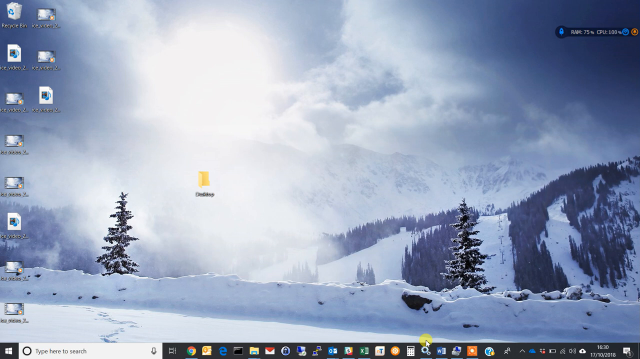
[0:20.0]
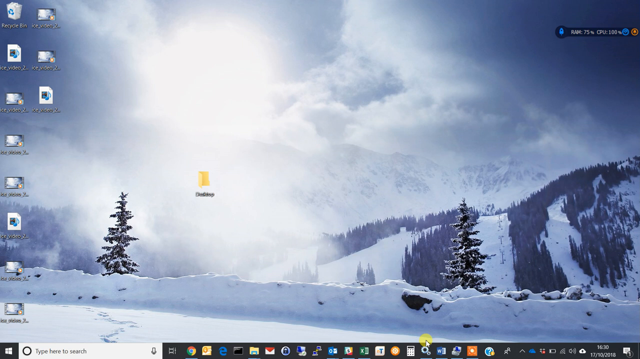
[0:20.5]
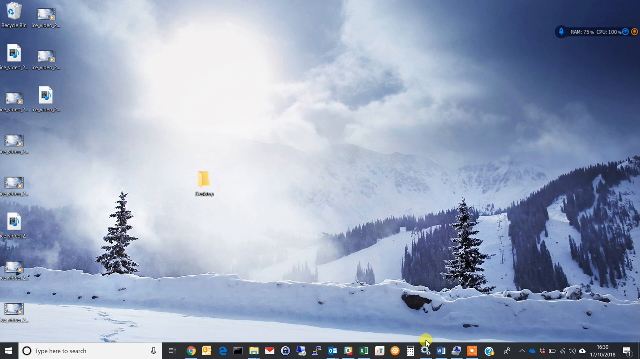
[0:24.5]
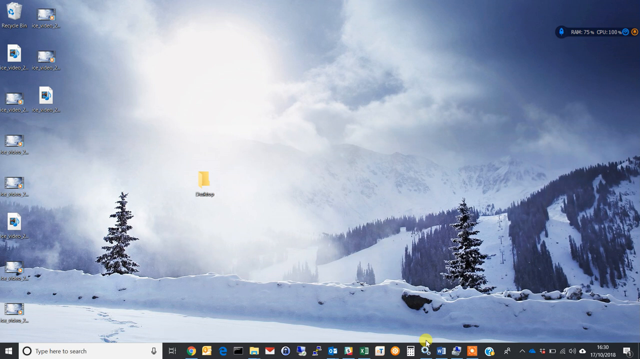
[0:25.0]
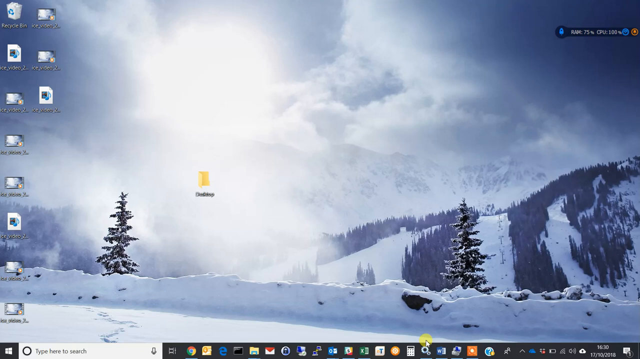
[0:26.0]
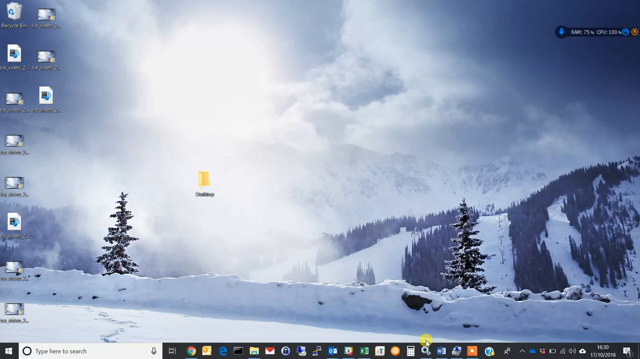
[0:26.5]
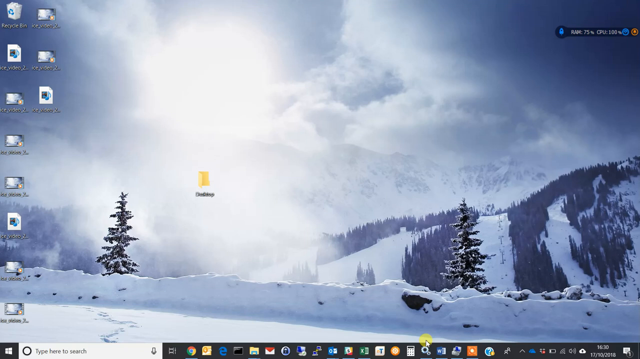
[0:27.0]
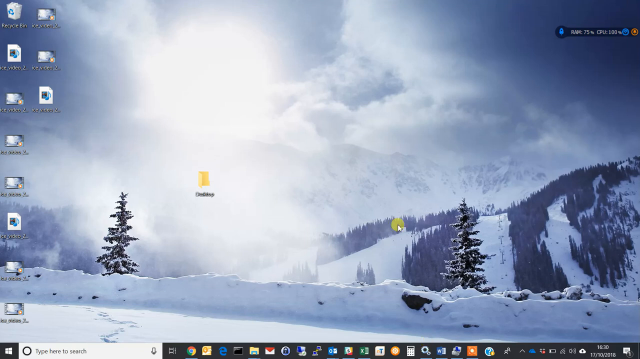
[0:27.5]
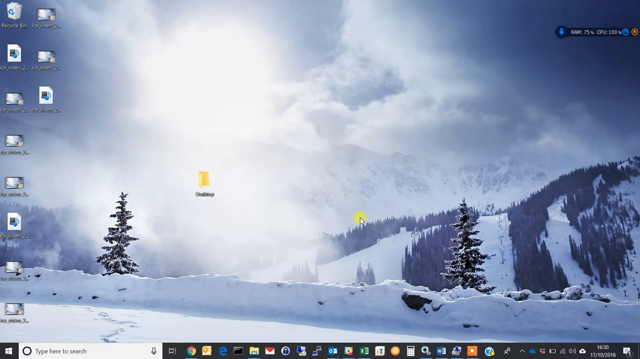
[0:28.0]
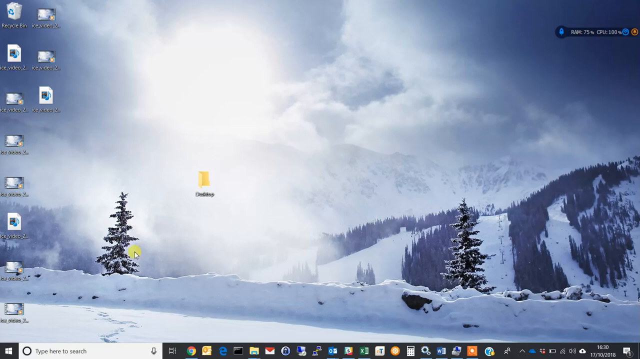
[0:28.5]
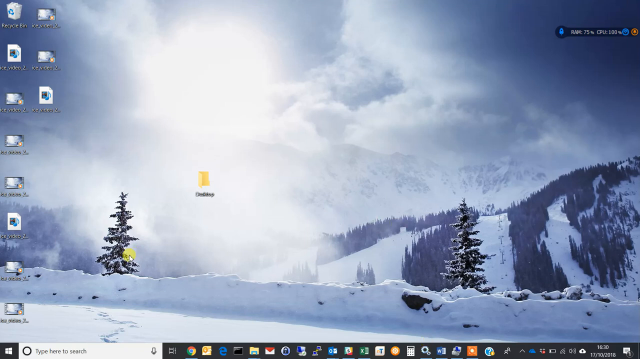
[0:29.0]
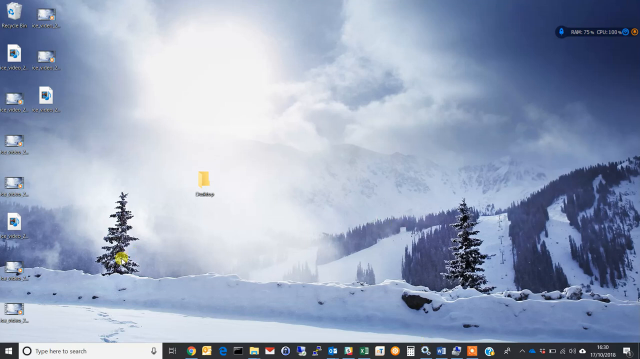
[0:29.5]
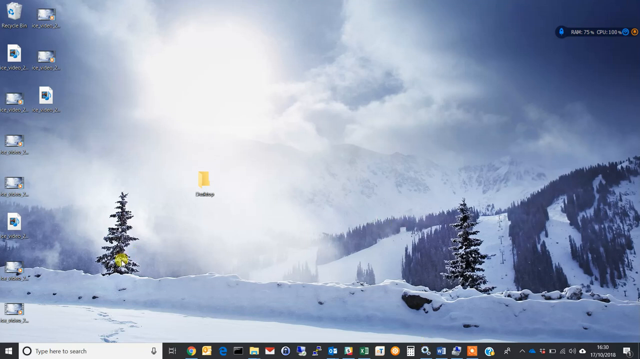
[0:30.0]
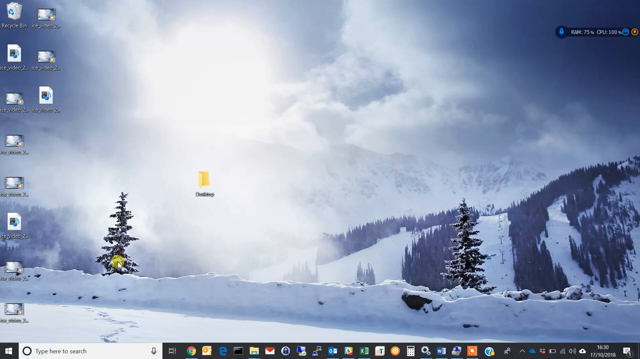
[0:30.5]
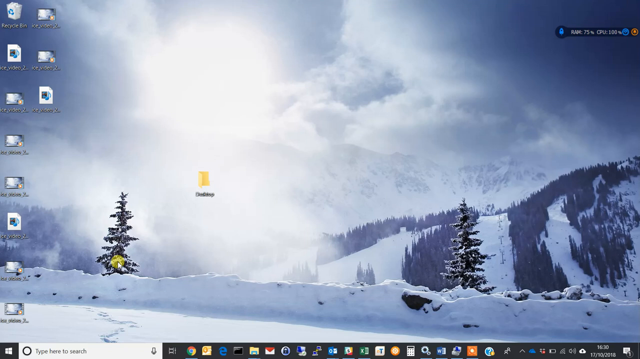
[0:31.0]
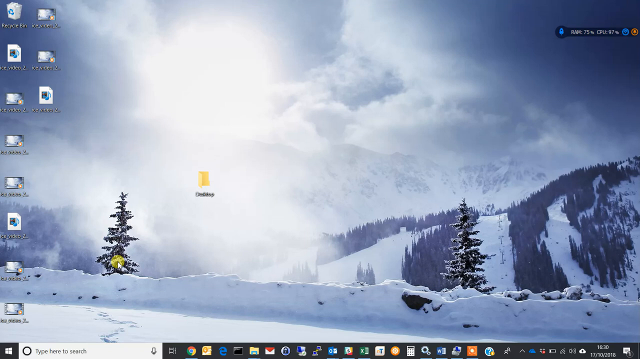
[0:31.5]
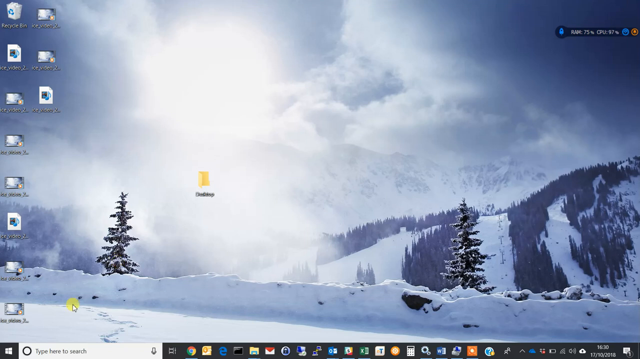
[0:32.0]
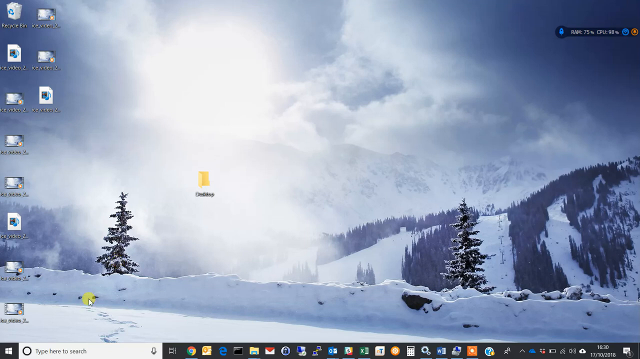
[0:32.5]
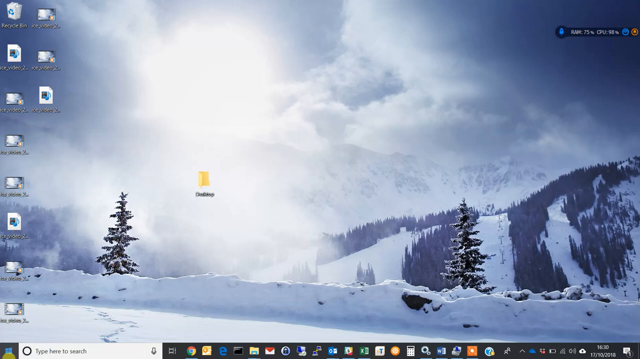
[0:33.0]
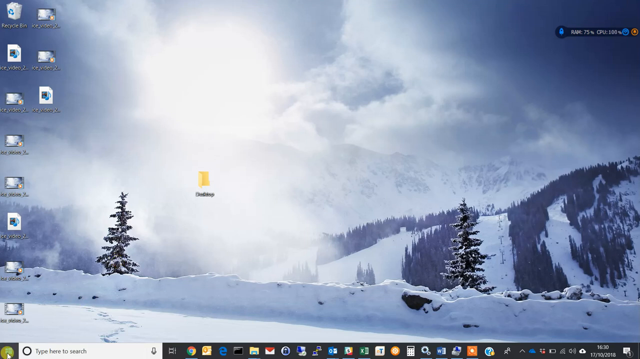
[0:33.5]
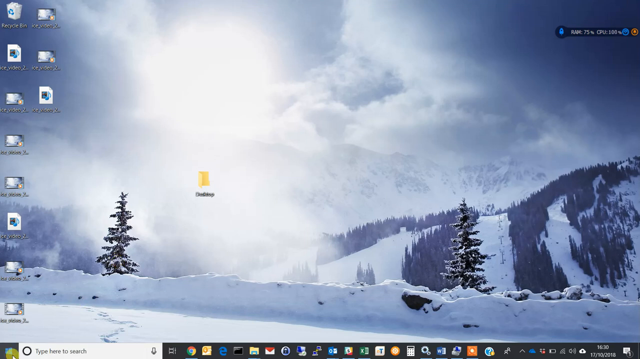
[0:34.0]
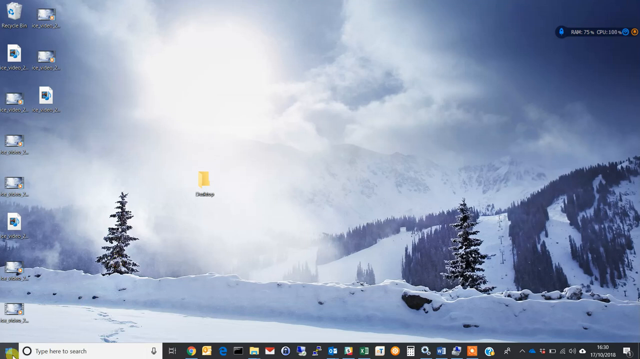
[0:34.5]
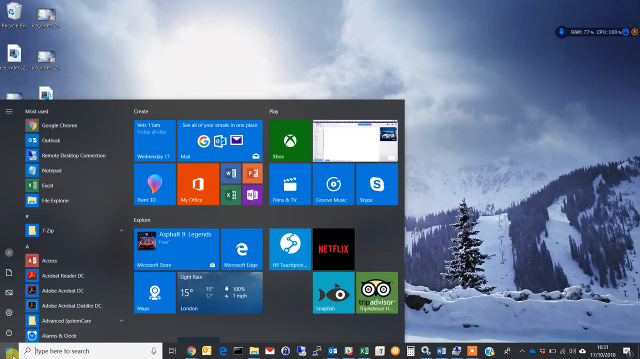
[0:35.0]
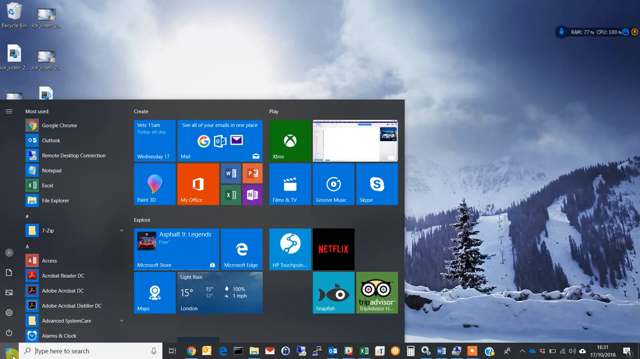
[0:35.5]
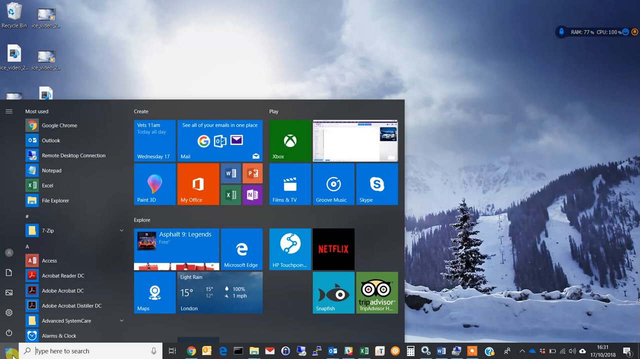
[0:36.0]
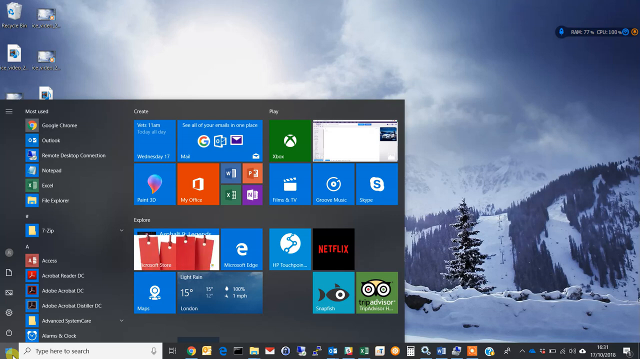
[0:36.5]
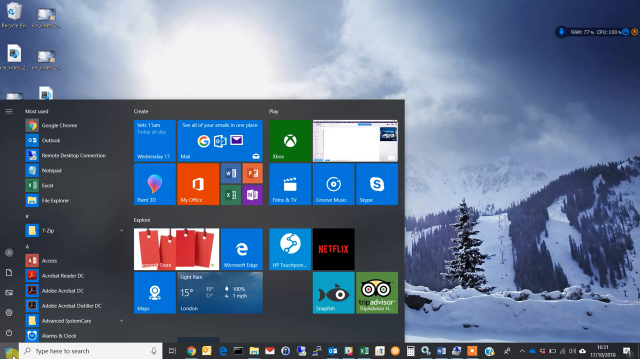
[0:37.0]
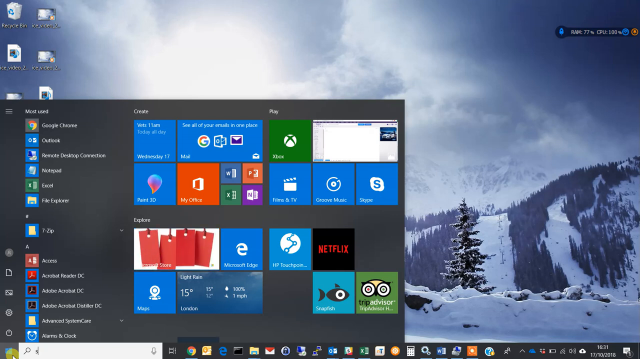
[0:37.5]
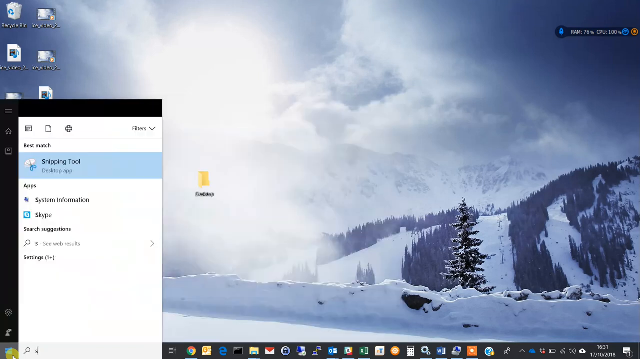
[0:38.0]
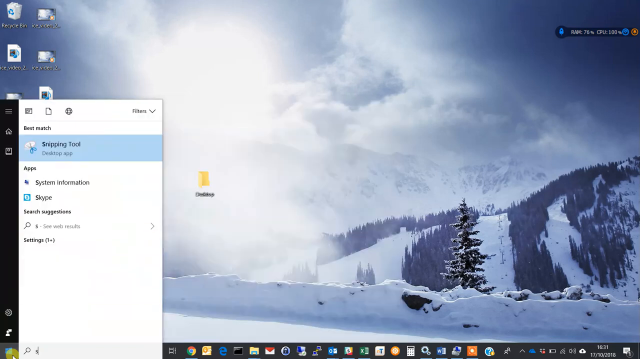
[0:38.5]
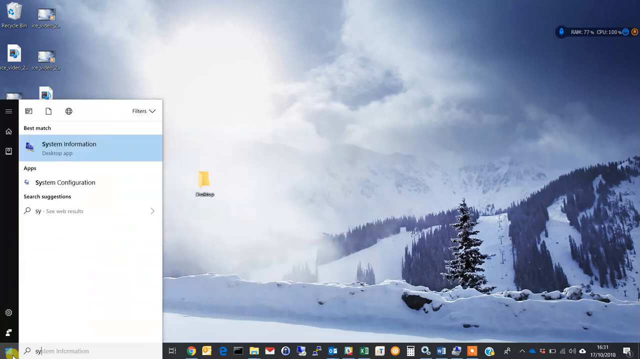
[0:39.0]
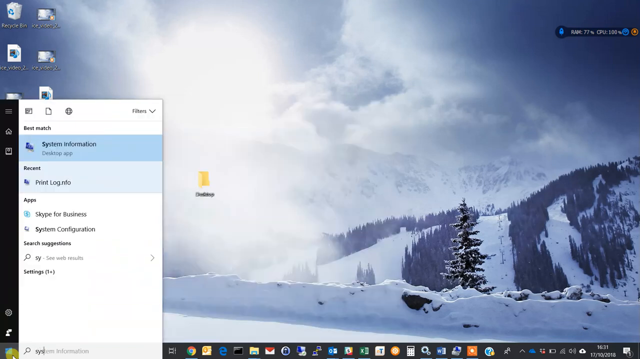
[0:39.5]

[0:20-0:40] The desktop remains on screen as a mouse cursor, highlighted by a yellow circle, moves from right to left. It goes to the bottom left and clicks the Windows icon, which opens the Start menu with many options. These include a Most Used section showing Google Chrome, Microsoft Outlook and various other apps. To the right are icons in the shape of different colored squares representing programs such as Paint 3D and My Office, along with an app labeled Netflix and one labeled Xbox. The Netflix icon is black with "Netflix" in red letters, and the Xbox icon is green with a white circle containing an X, the Xbox brand logo. These two are the most prominent icons in the Start menu.